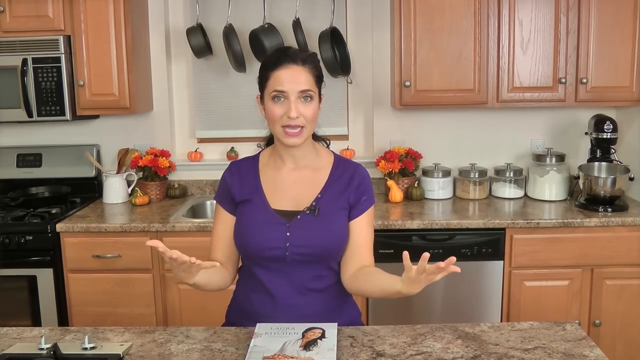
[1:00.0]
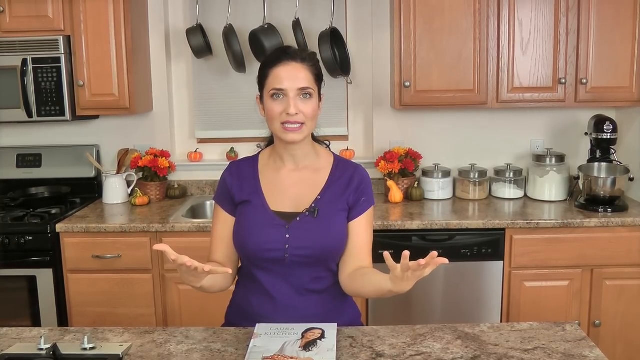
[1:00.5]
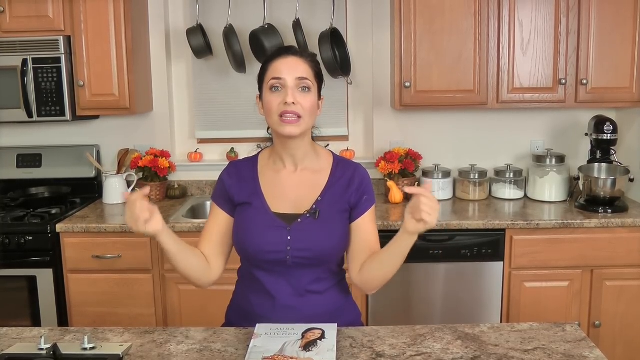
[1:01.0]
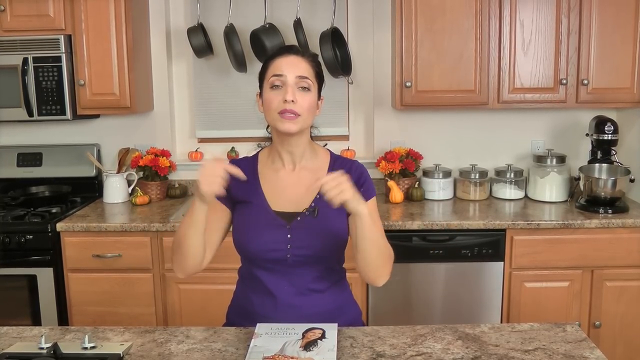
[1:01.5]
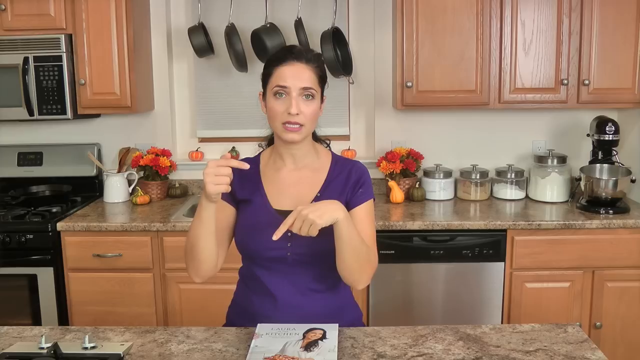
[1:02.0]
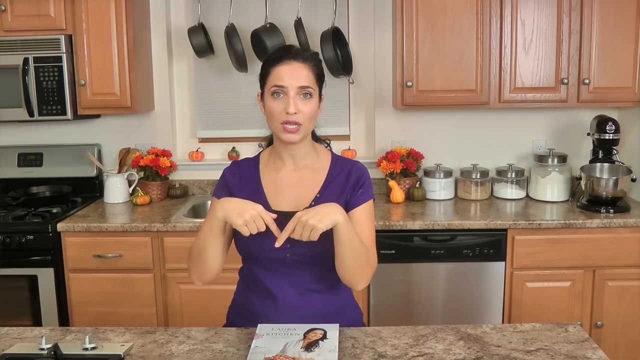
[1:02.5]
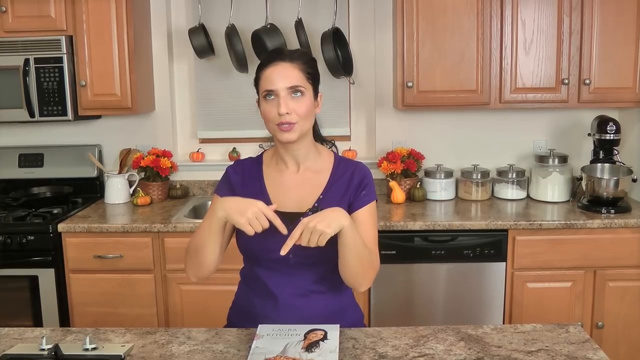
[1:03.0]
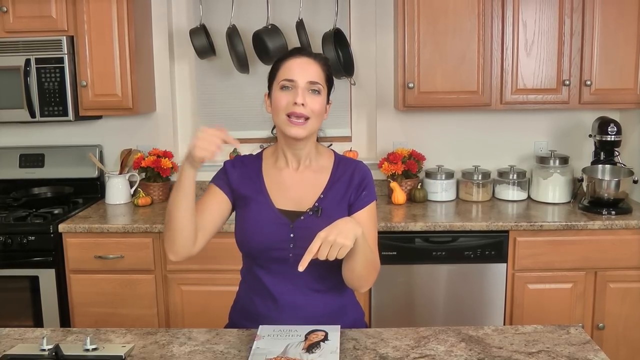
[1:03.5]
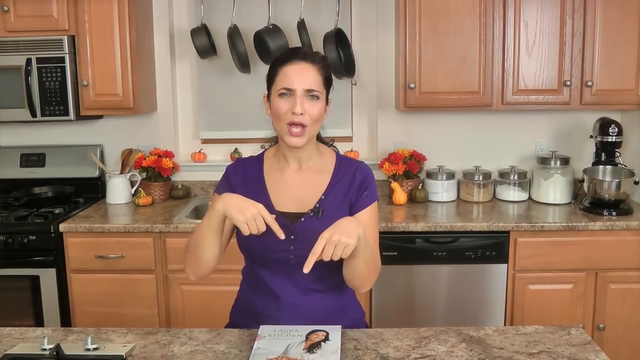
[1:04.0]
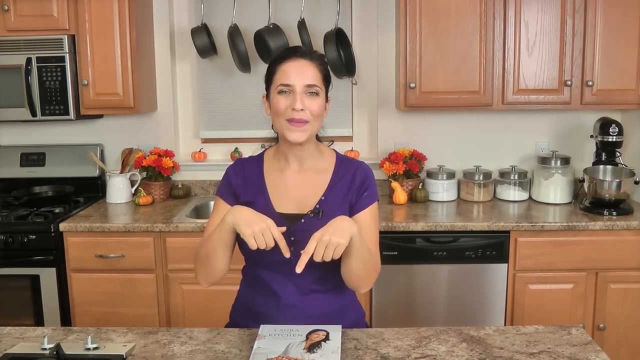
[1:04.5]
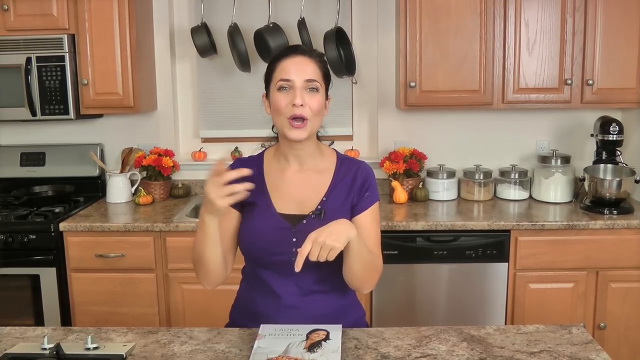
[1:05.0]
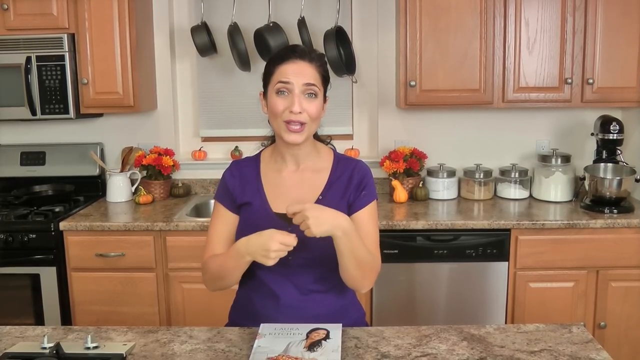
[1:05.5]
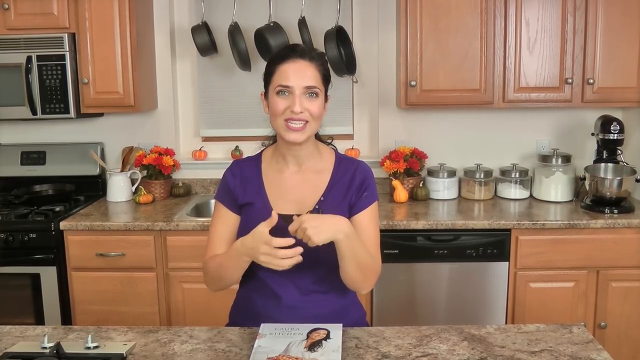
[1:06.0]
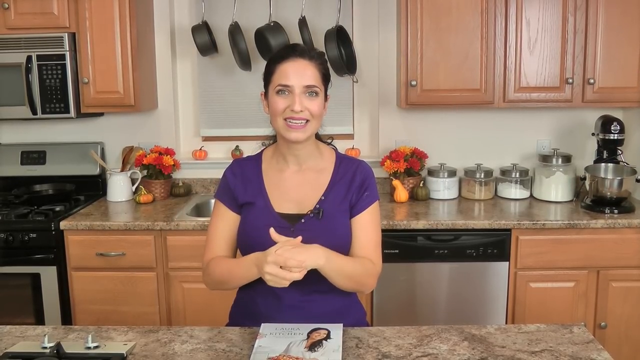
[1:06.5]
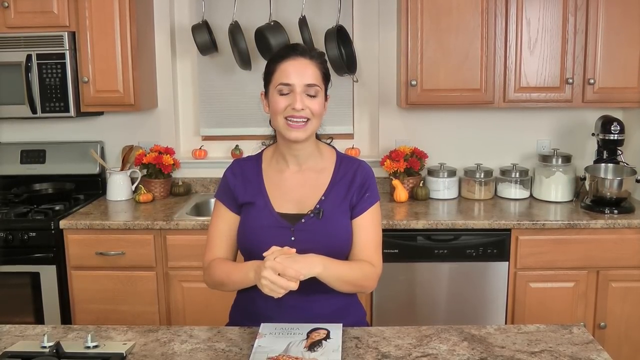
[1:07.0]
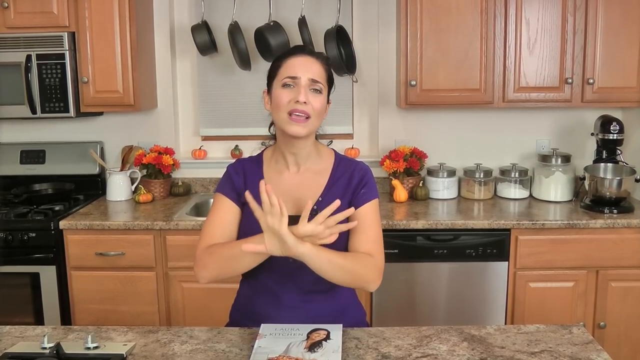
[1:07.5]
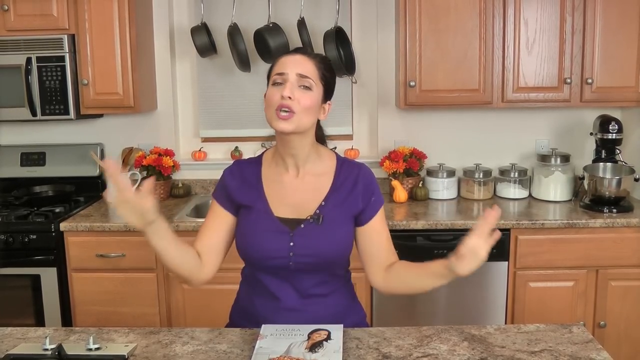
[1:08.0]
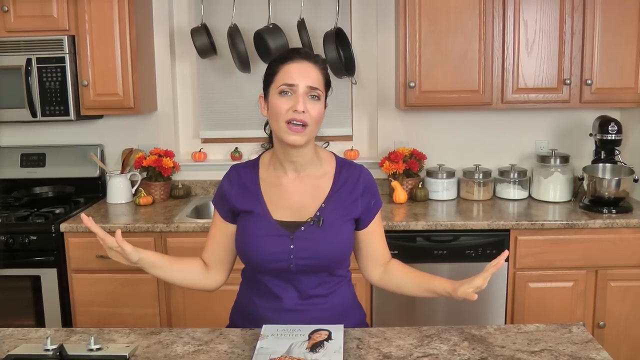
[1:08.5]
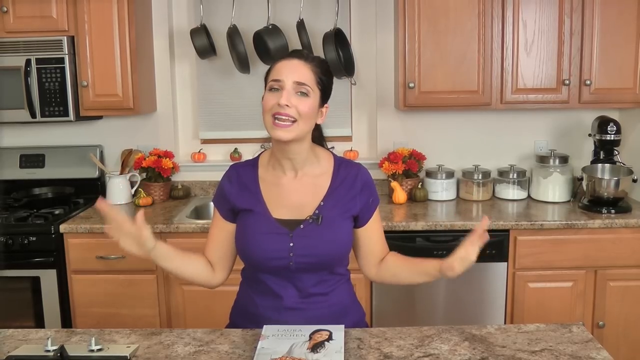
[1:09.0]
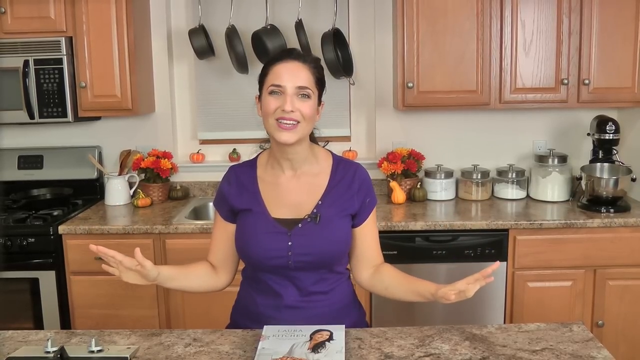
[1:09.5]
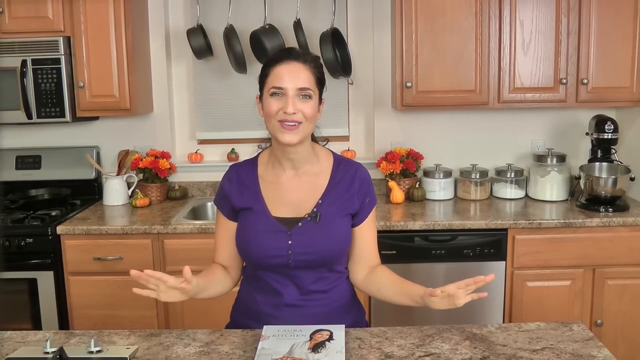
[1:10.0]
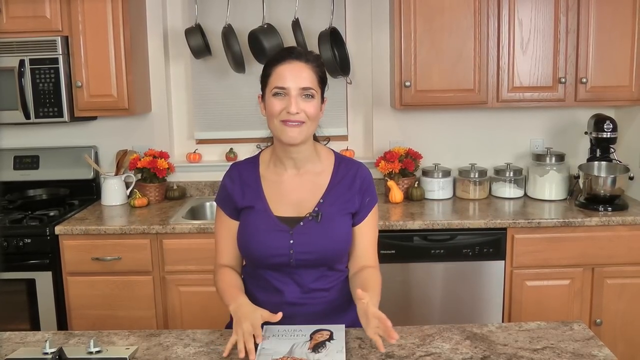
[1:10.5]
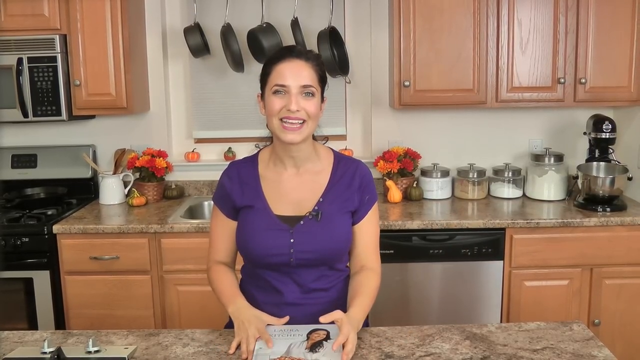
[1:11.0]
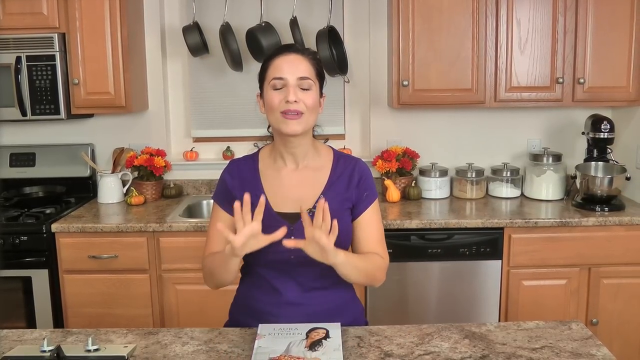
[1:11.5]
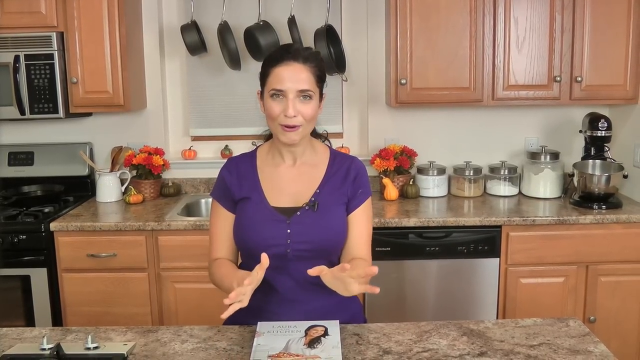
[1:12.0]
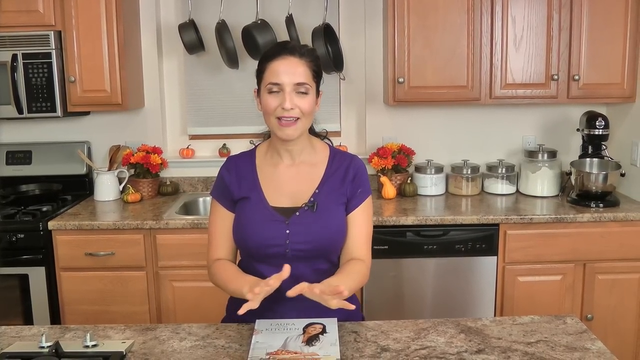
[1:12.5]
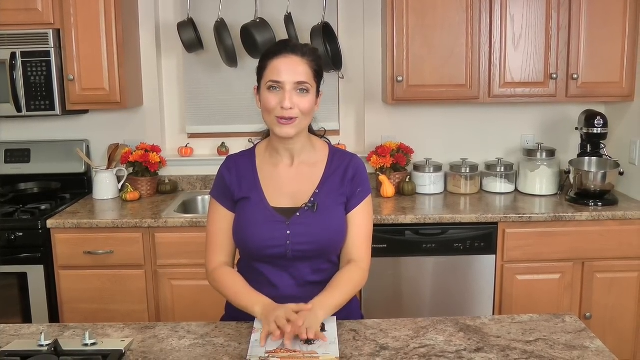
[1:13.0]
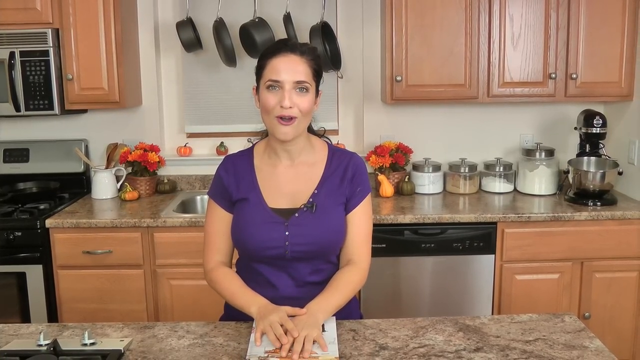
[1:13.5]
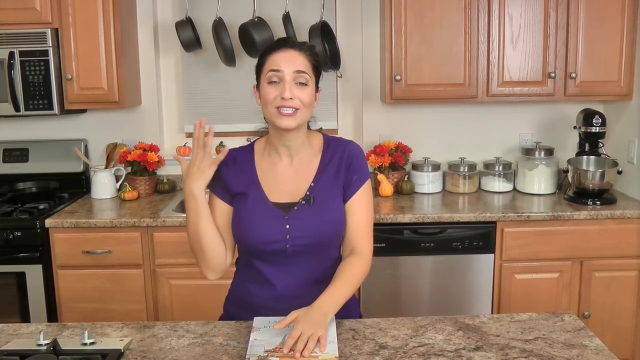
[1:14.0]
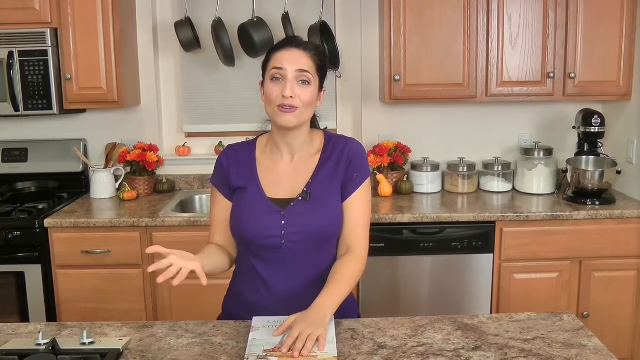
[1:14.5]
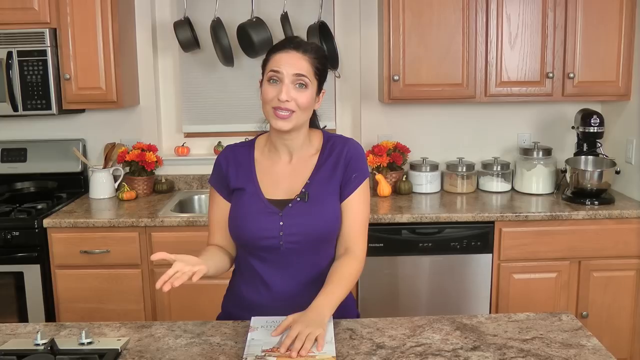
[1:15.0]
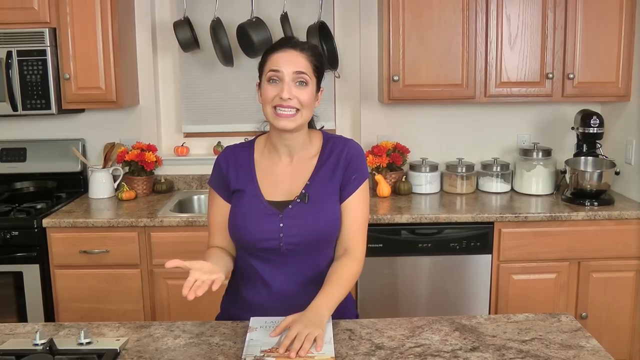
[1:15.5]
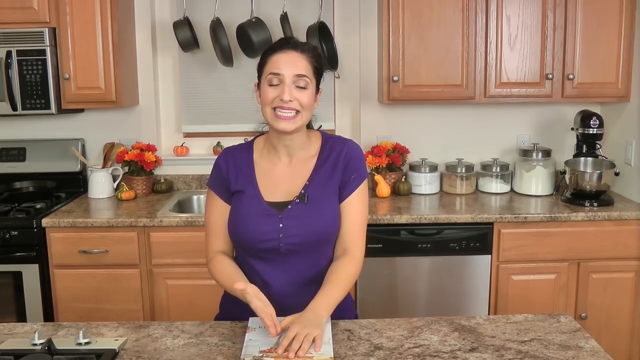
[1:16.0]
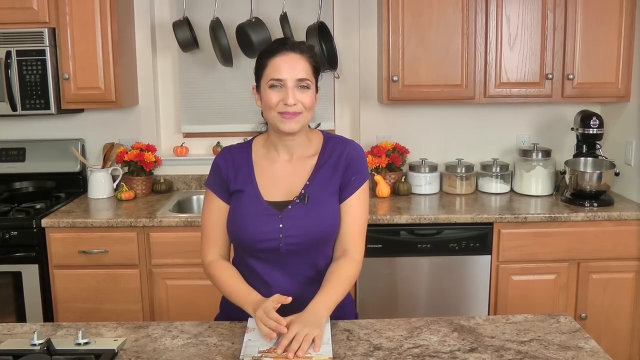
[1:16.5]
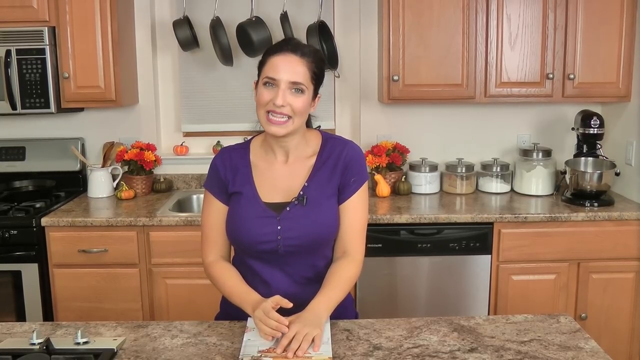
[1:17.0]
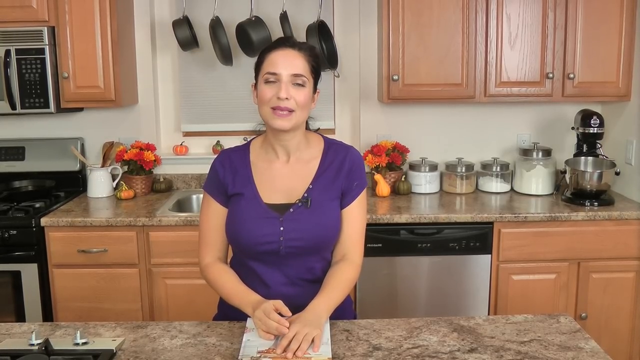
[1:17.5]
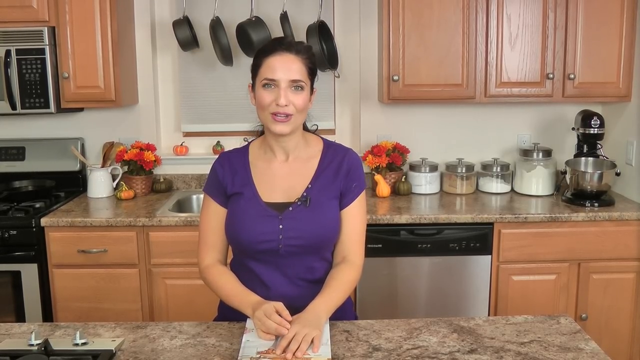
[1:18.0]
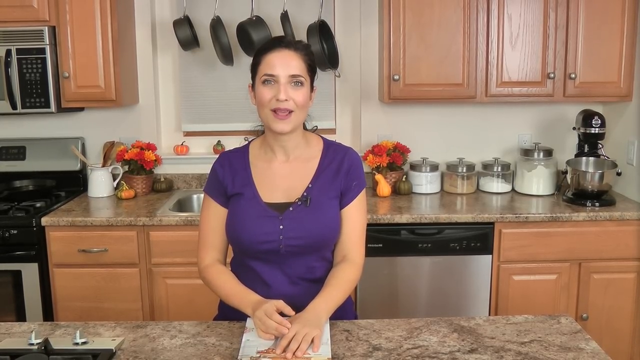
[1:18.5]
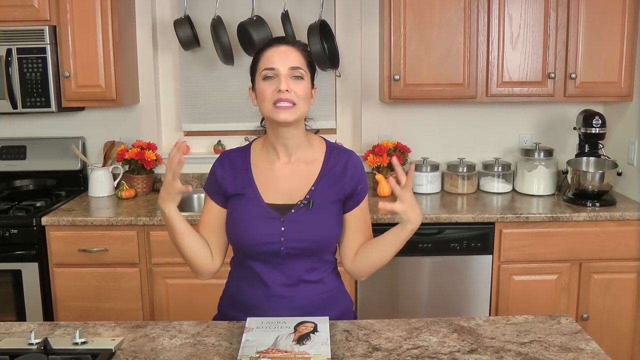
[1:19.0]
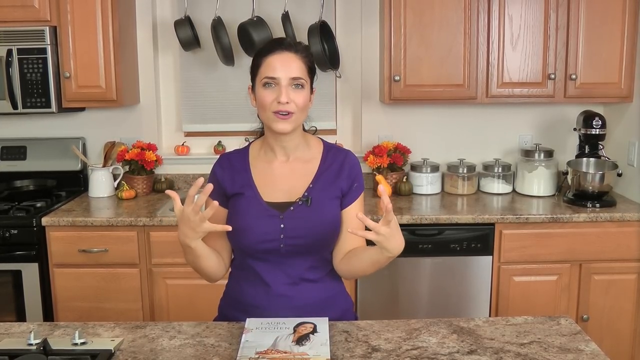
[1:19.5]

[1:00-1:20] A white woman who looks about 35 or 36 years old wears a purple and black top and talks using her hands while facing the camera. The kitchen behind her has a sink for washing dishes, a dishwasher, a microwave in black and silver, a black and white stove, and a silver and black washing machine. Decorative flowers in orange, red and green are at the back, along with decorative green and red pumpkins. There is a mixing machine. Where the pans hang, there looks like a window. In front of her is a table that seems to have another stove on it.